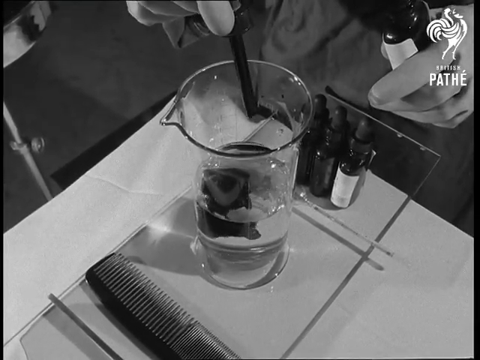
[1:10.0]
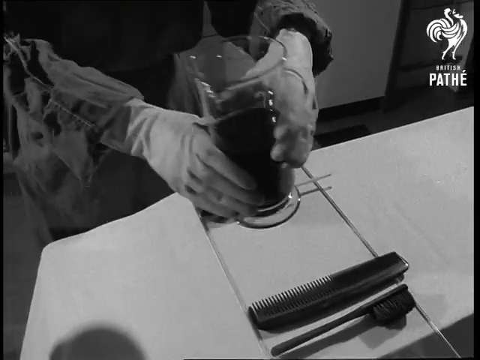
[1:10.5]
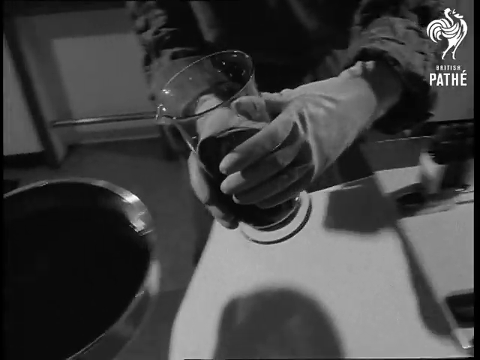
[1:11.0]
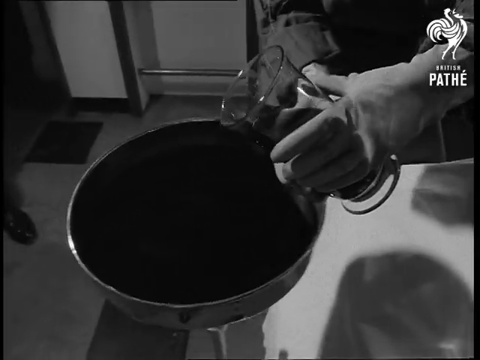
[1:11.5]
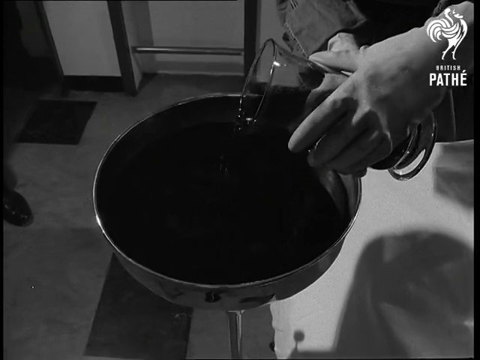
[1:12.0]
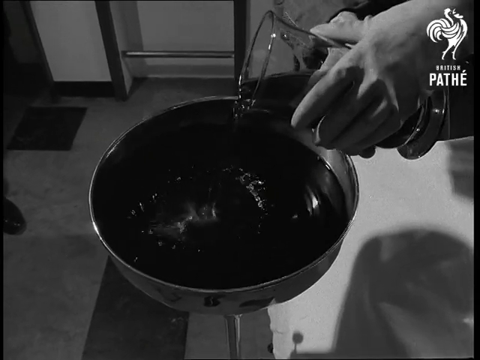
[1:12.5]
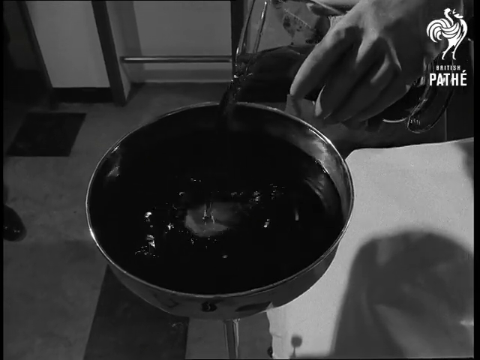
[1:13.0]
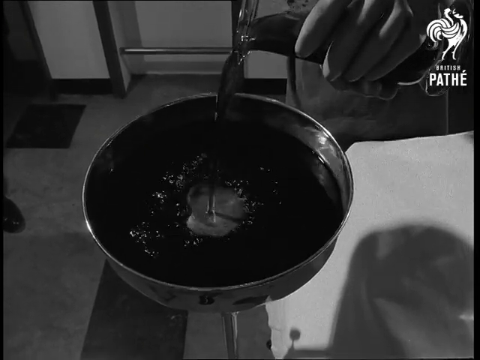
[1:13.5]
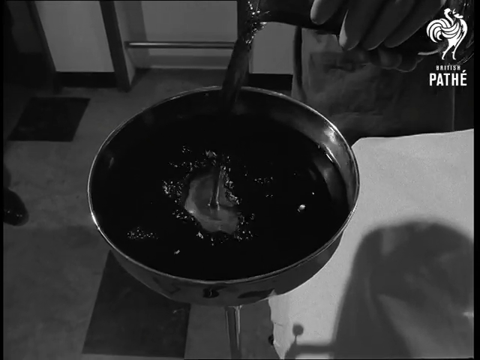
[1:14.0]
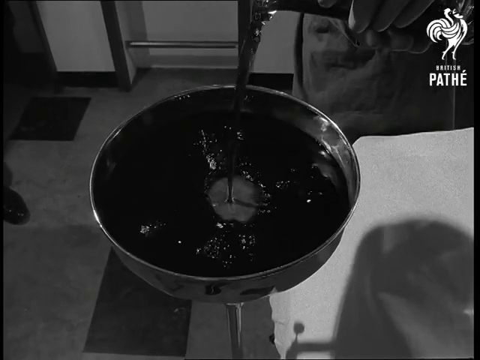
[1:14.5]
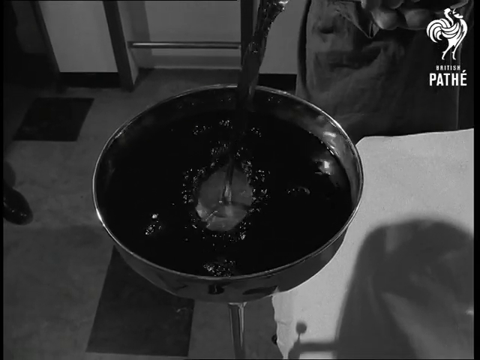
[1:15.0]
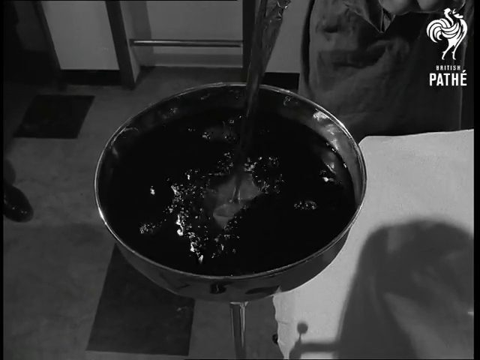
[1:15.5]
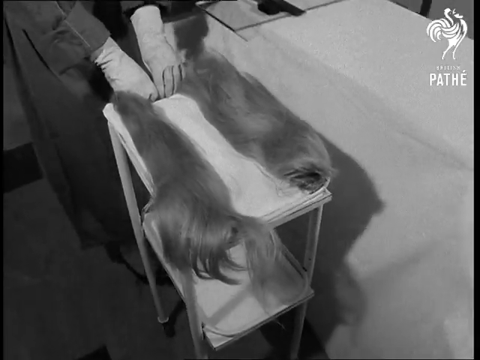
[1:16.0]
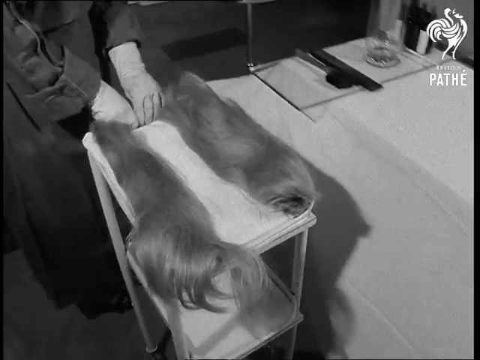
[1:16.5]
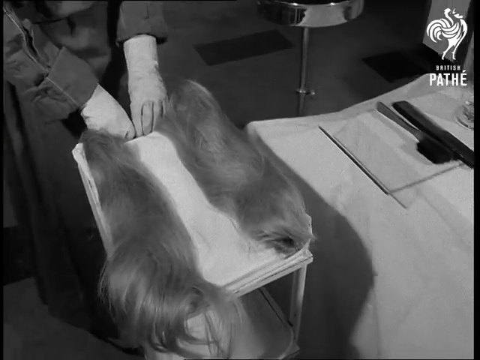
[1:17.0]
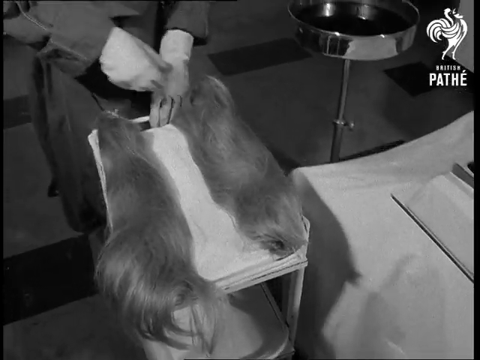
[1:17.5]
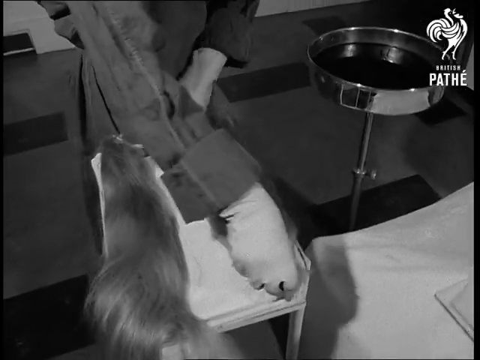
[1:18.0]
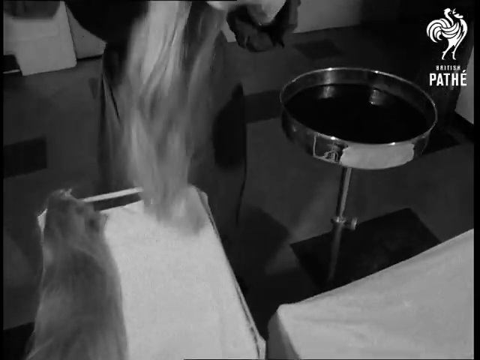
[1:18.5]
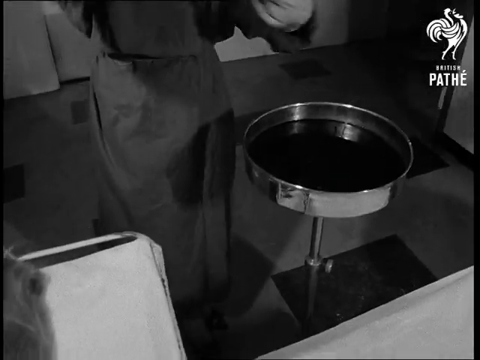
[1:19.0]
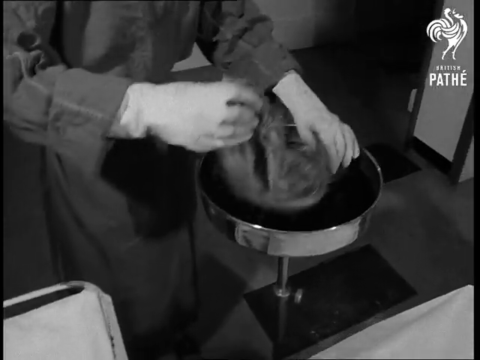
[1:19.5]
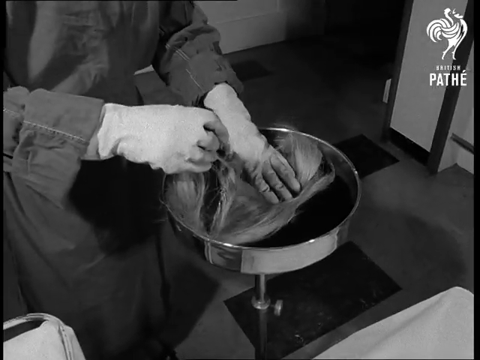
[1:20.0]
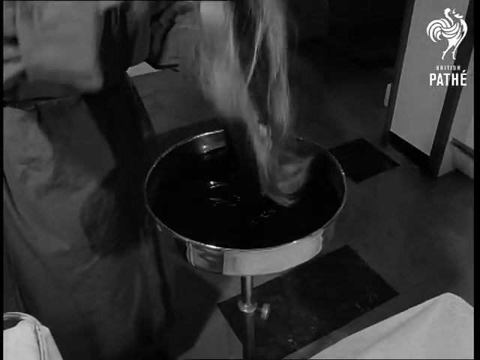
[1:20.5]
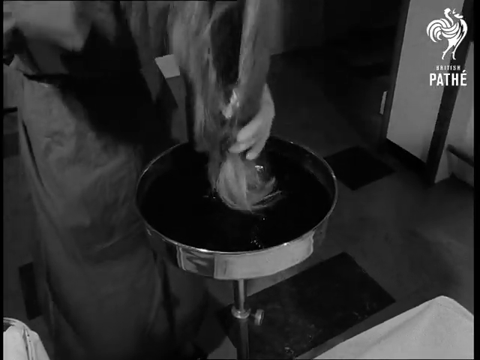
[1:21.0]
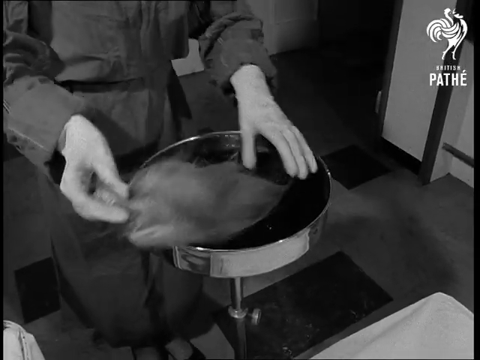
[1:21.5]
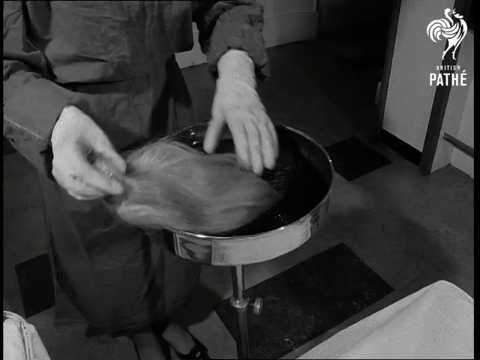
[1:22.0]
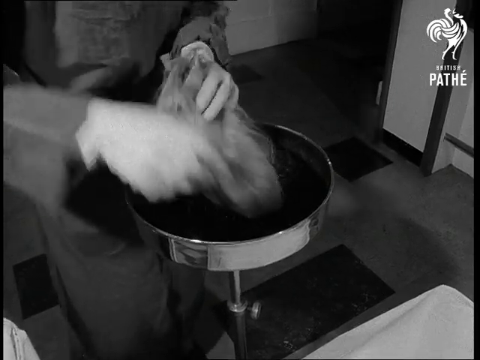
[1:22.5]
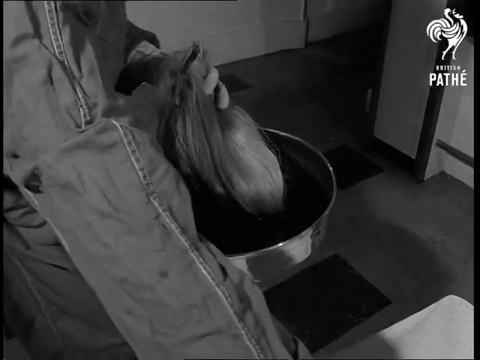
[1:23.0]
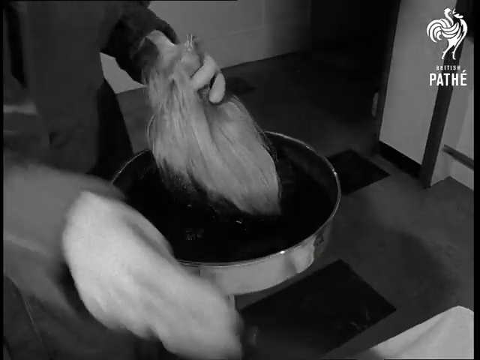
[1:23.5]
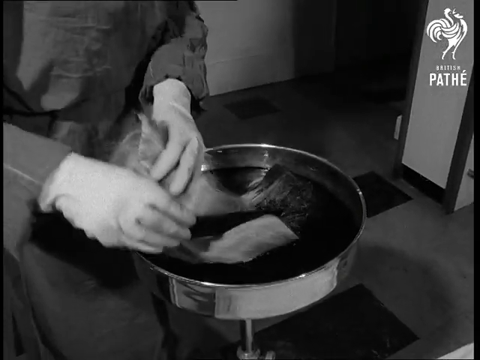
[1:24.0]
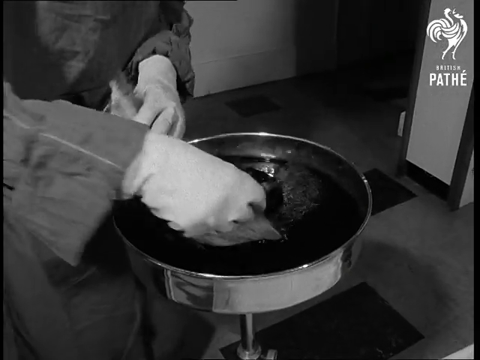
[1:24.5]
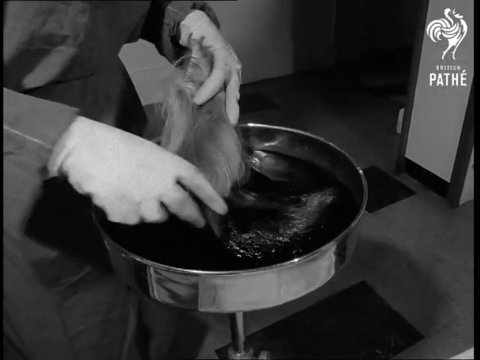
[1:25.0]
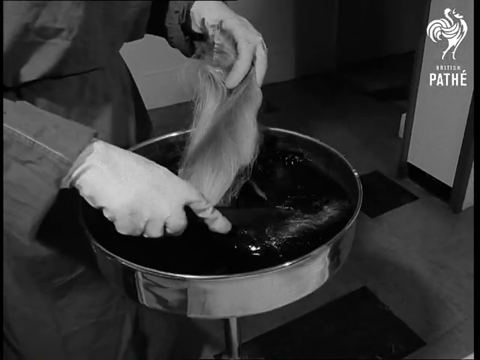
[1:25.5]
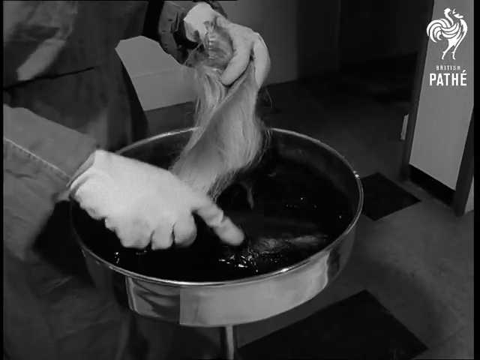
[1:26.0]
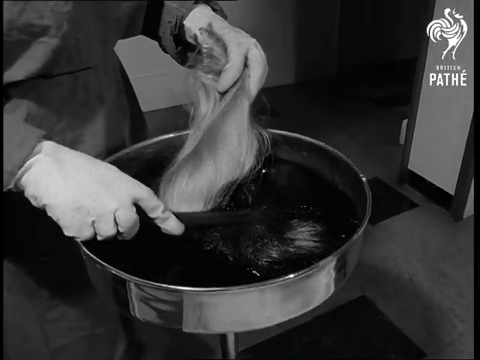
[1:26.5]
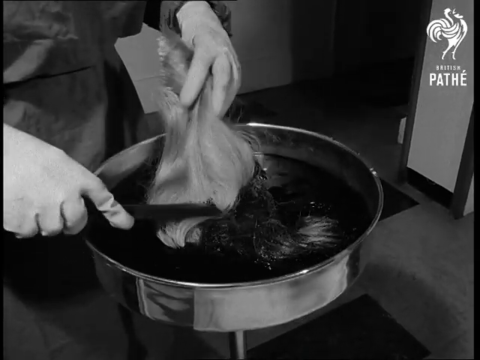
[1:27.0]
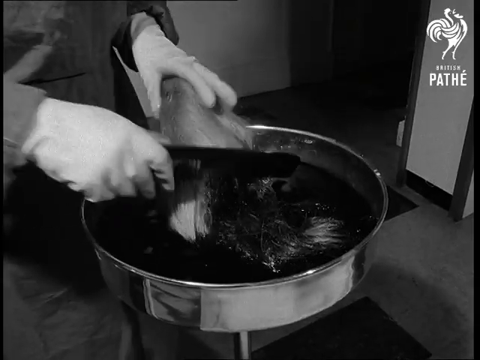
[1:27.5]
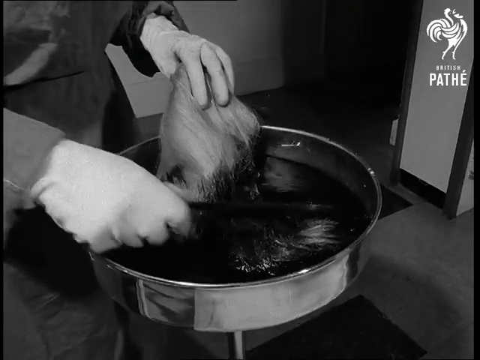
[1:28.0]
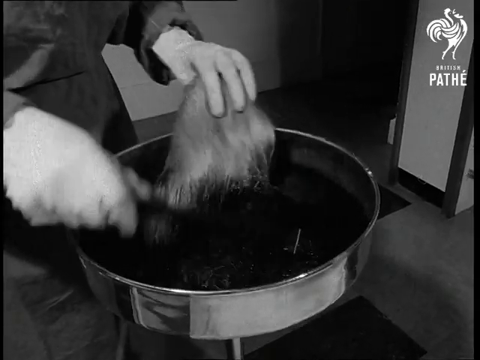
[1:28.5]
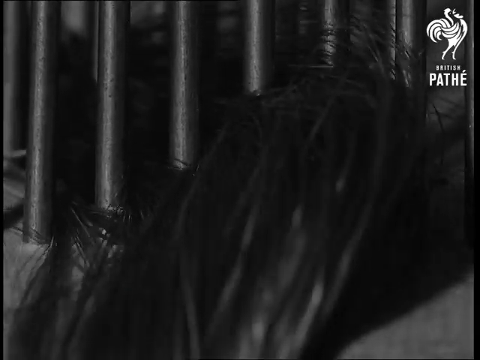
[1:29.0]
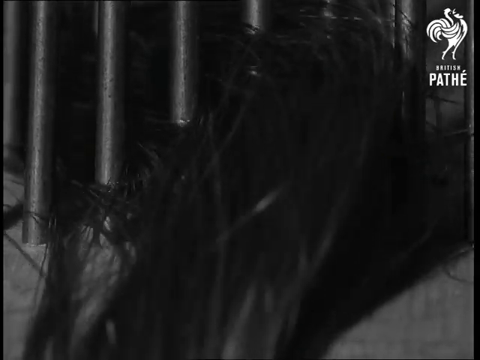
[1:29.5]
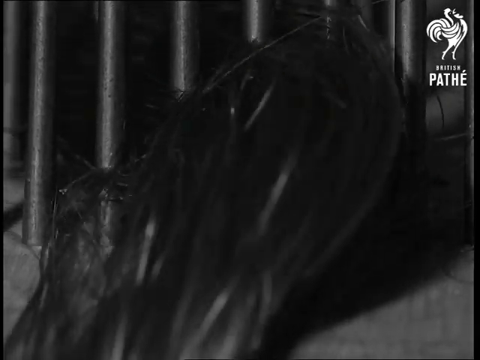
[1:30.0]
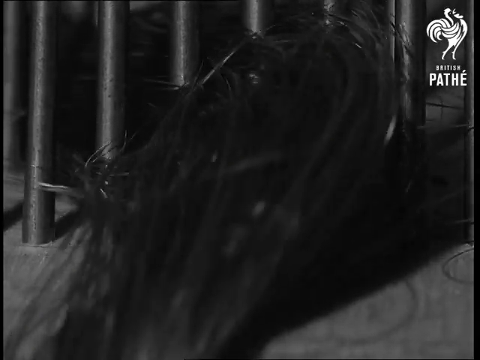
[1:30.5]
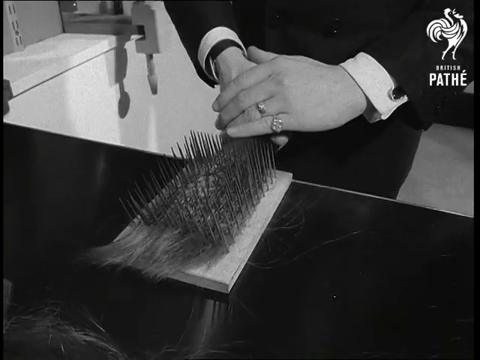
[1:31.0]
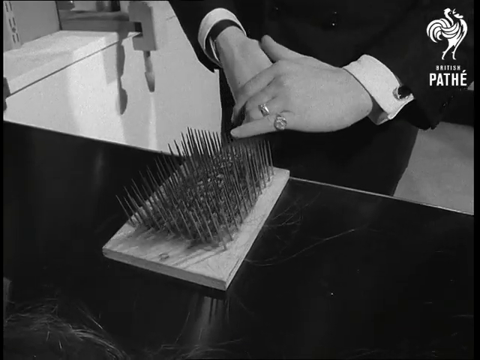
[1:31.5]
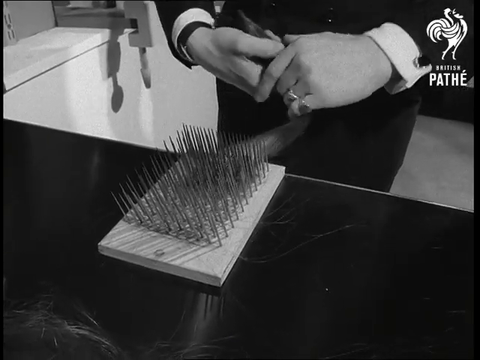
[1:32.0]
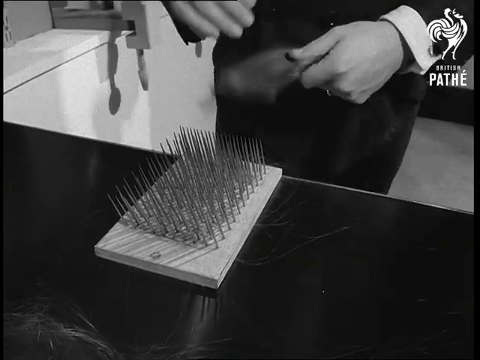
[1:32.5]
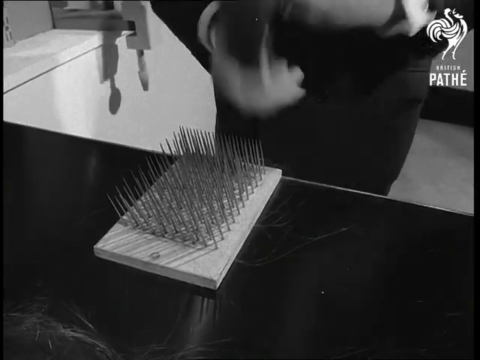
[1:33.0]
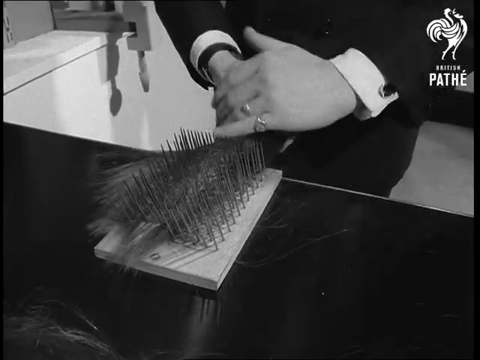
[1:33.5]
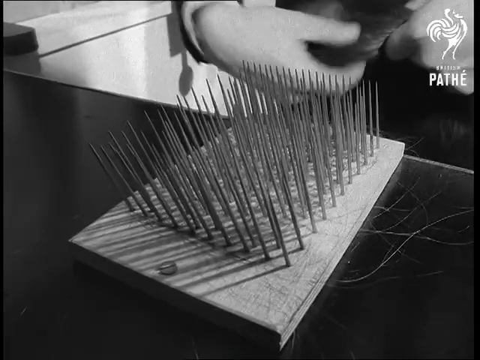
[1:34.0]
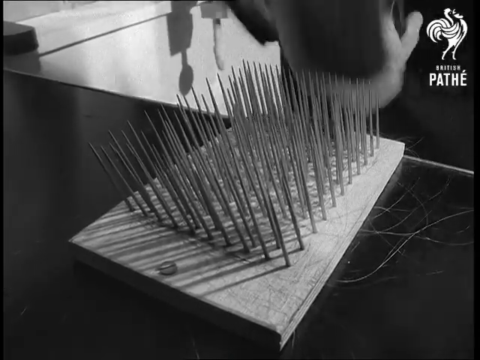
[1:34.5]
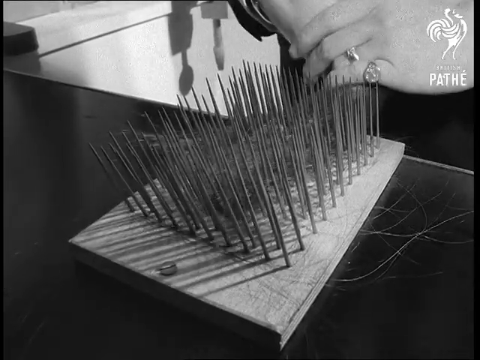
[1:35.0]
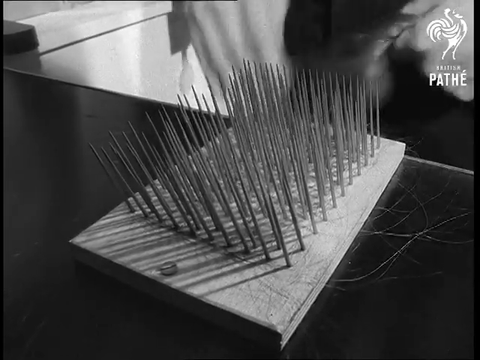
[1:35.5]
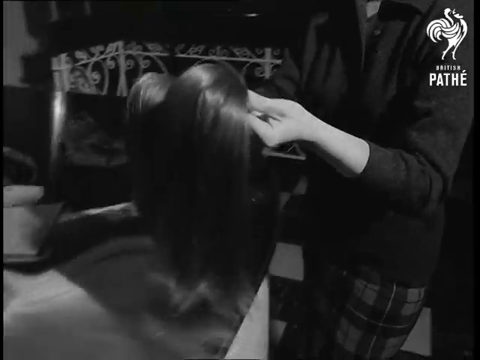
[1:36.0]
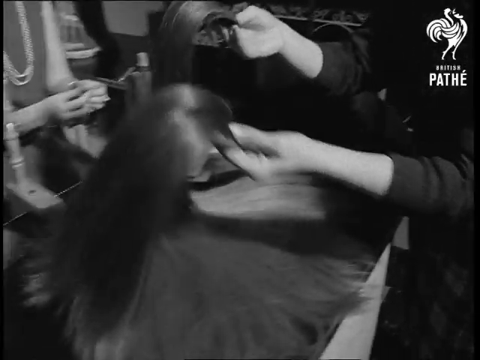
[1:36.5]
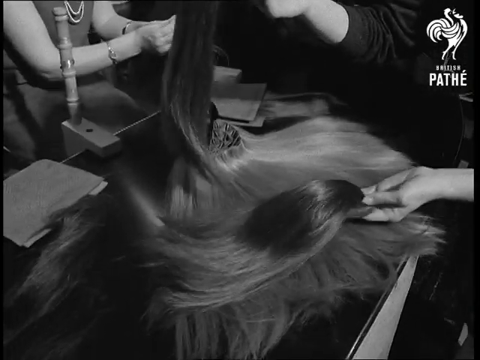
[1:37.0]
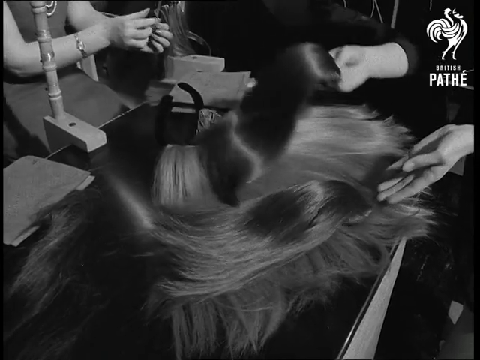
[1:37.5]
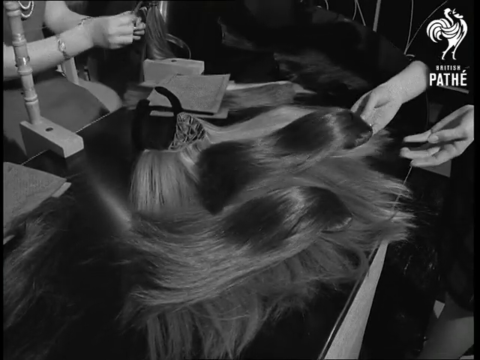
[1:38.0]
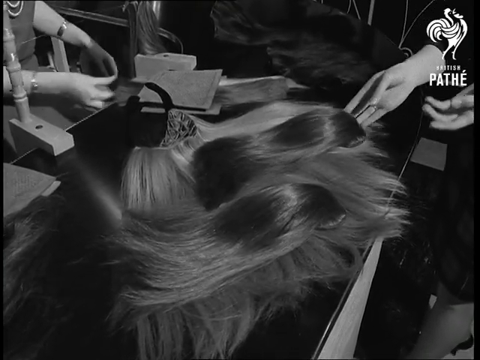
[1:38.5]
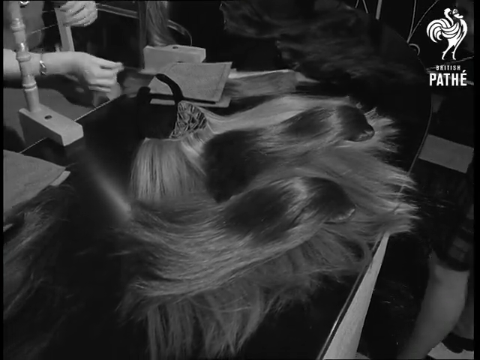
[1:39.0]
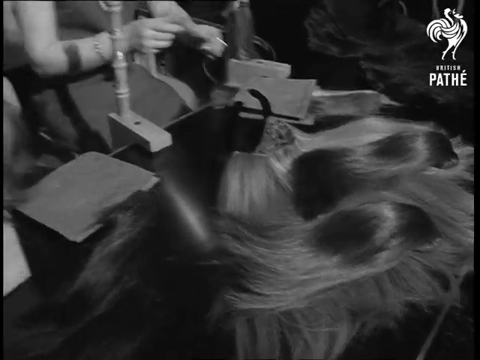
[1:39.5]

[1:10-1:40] Dye is put into a large glass full of water. In a close-up, a pair of hands picks up the glass and pours it into some sort of large open container. The blonde wig, cut into two pieces, is on a small table that is wheeled over to the container of dye. One half of the wig is inserted into the dye, which turns it a darker color, and a black comb is used to make sure the wig is saturated. The hair is then repeatedly combed through metal spikes attached to a wooden board, likely to separate the hair fibers and make the hair soft. The two dyed hair pieces are placed on a table in front of a sewist.